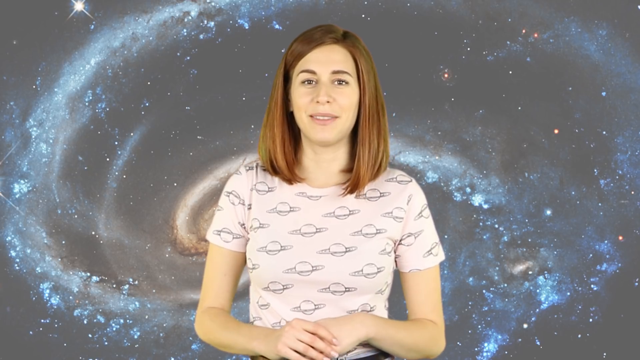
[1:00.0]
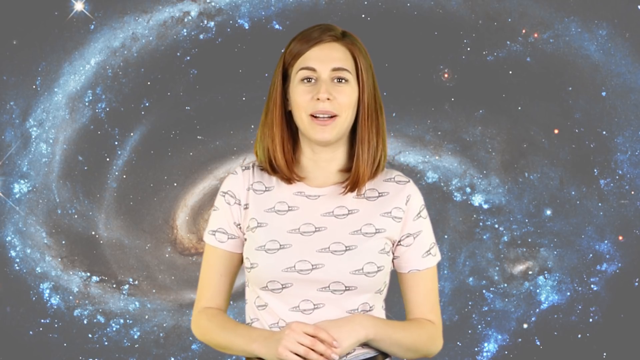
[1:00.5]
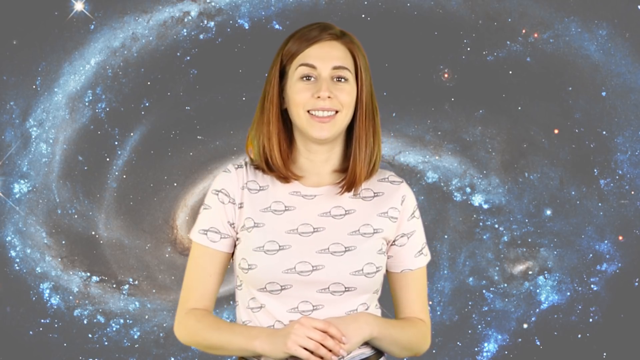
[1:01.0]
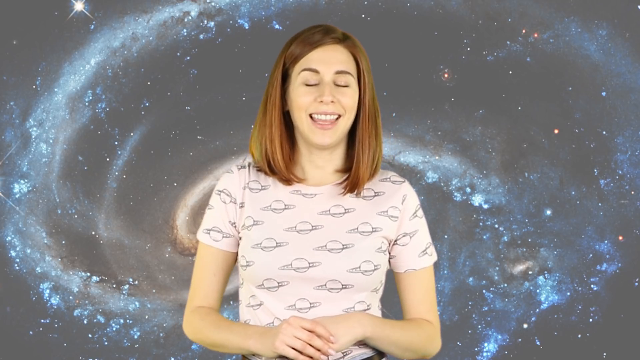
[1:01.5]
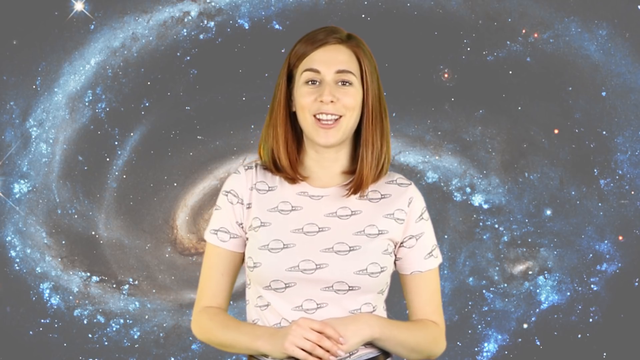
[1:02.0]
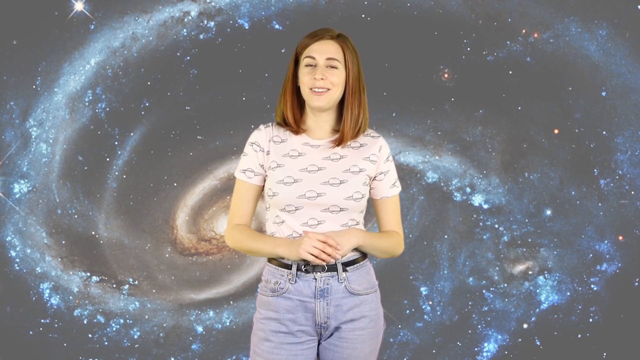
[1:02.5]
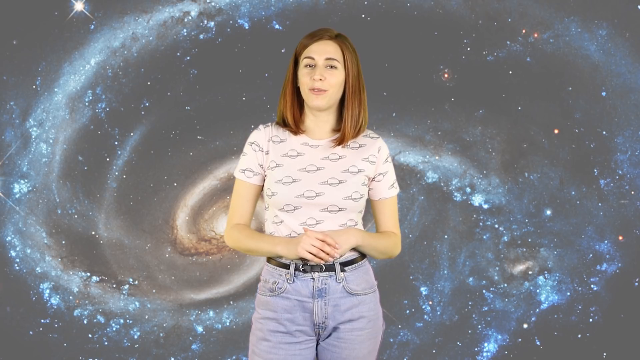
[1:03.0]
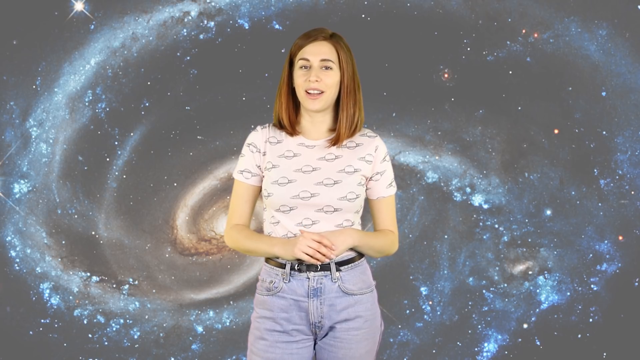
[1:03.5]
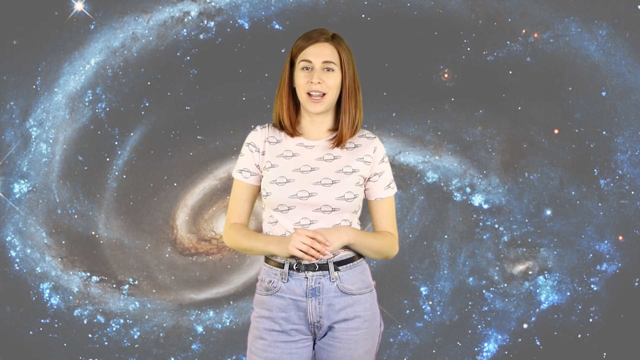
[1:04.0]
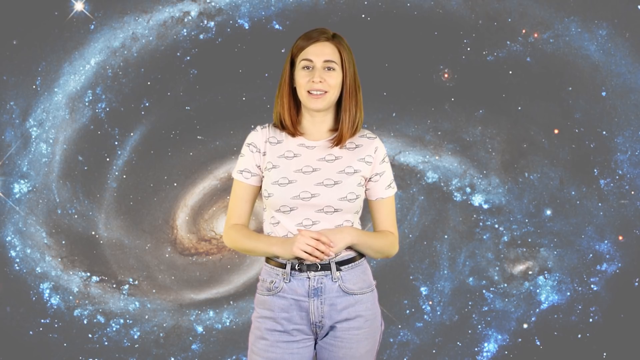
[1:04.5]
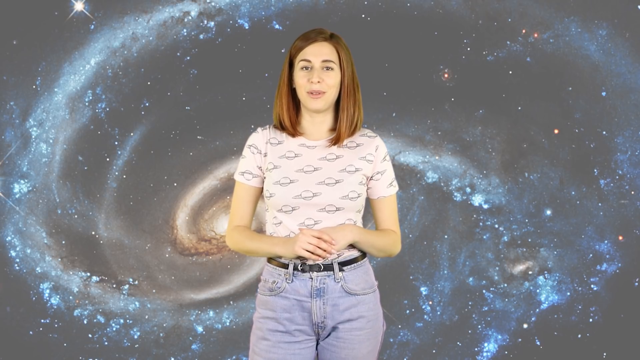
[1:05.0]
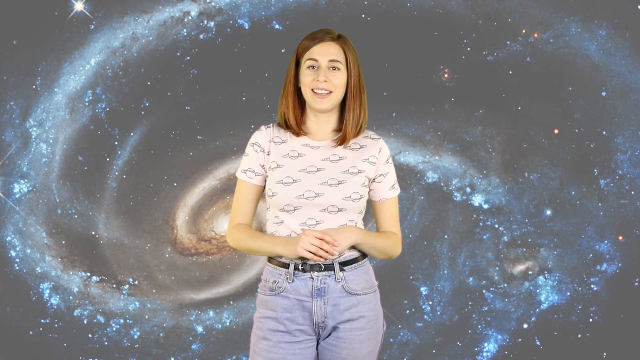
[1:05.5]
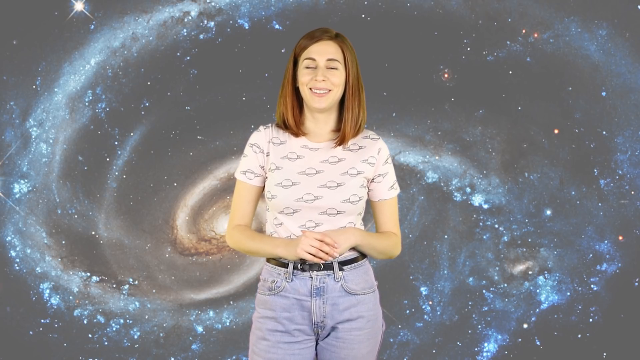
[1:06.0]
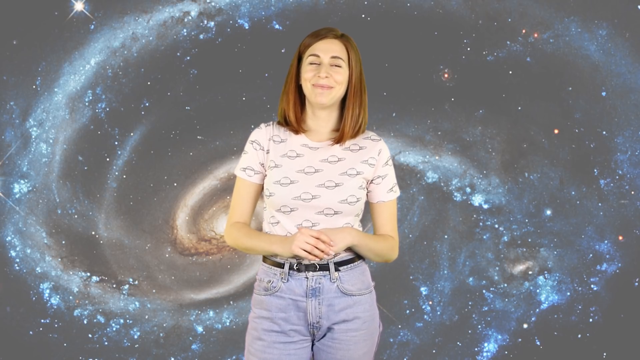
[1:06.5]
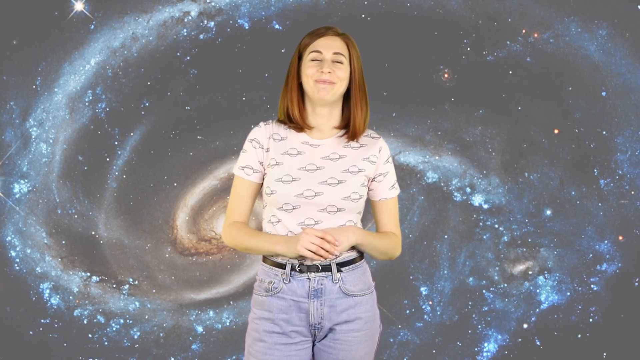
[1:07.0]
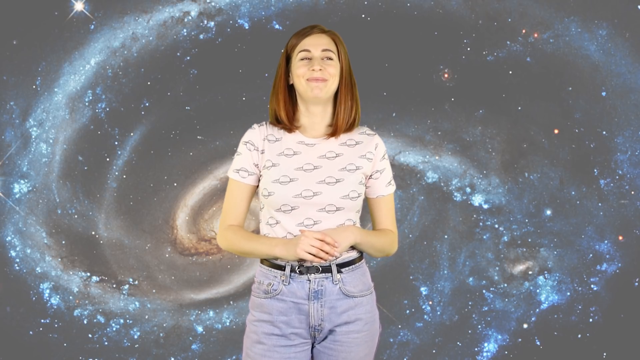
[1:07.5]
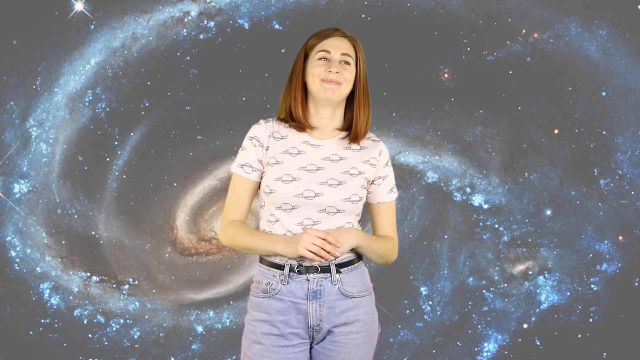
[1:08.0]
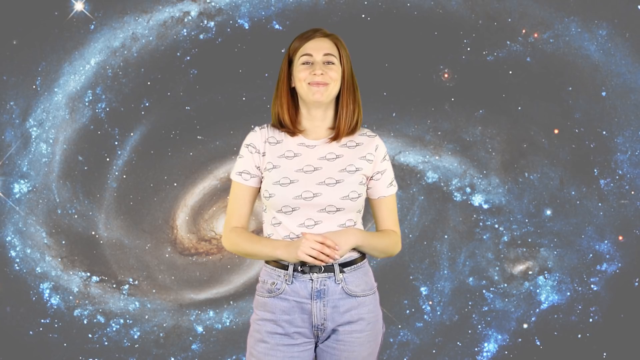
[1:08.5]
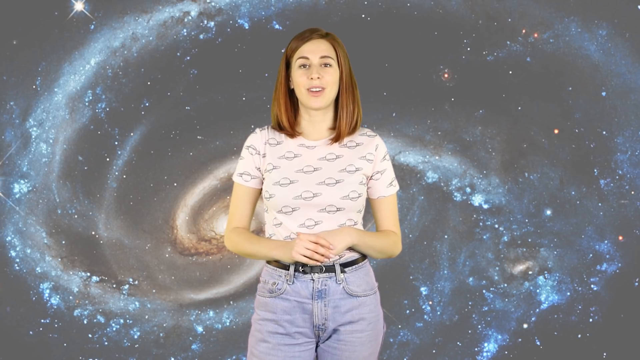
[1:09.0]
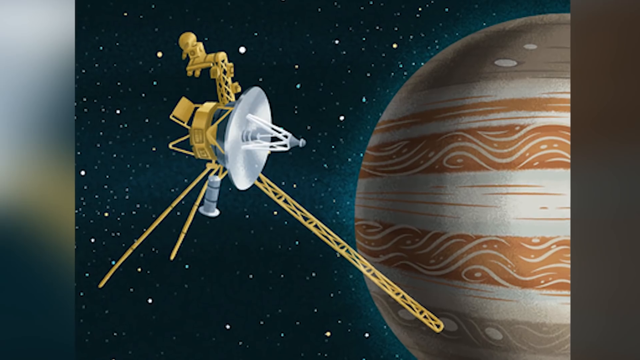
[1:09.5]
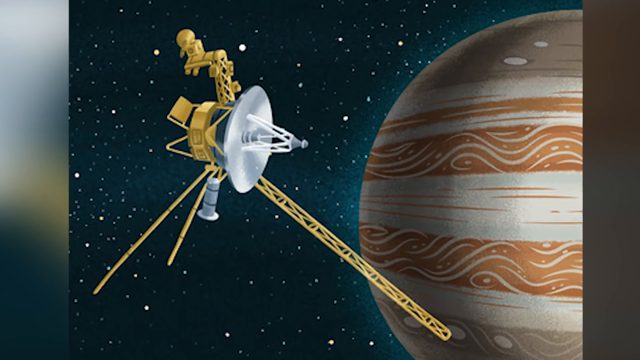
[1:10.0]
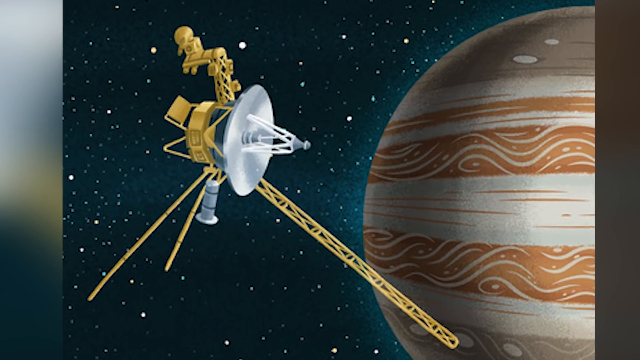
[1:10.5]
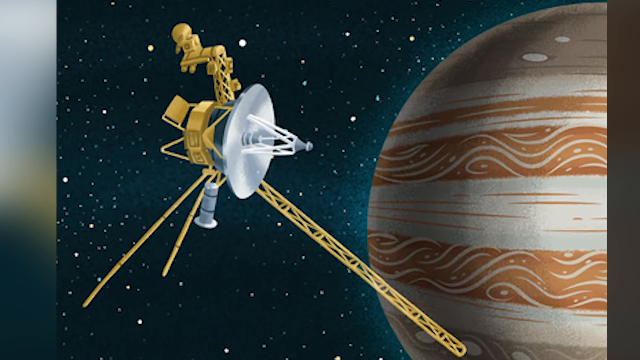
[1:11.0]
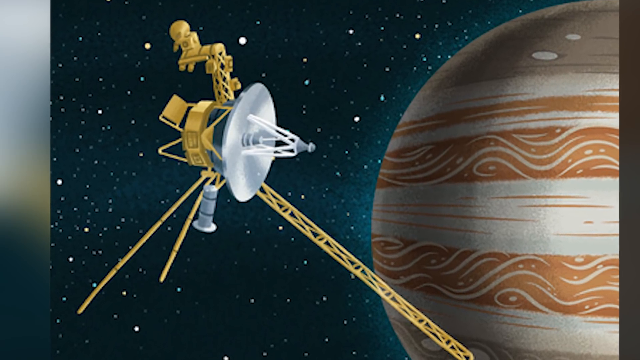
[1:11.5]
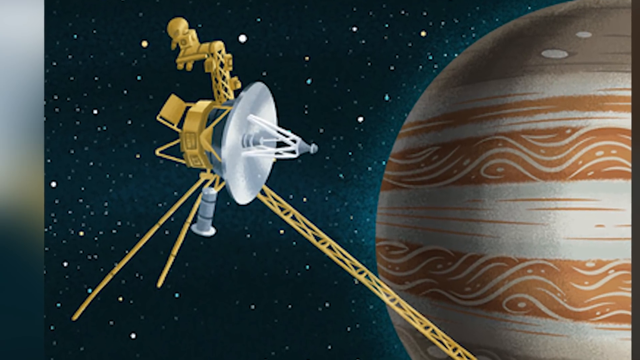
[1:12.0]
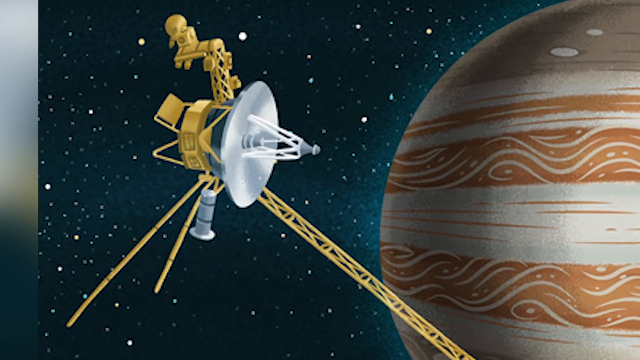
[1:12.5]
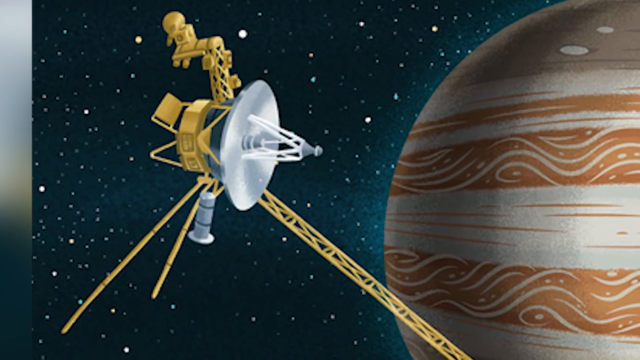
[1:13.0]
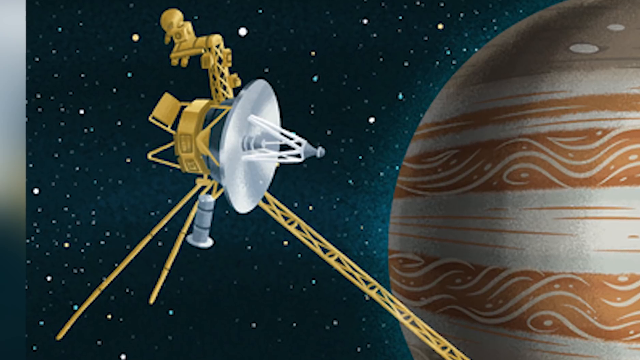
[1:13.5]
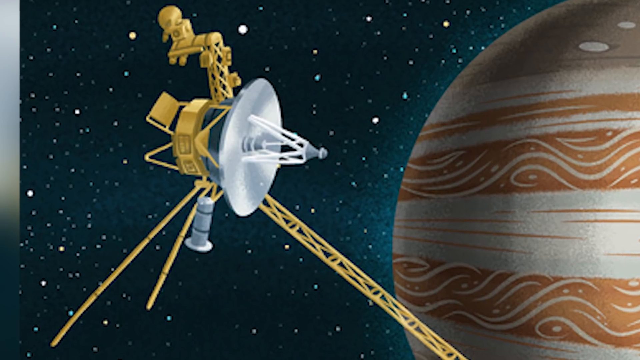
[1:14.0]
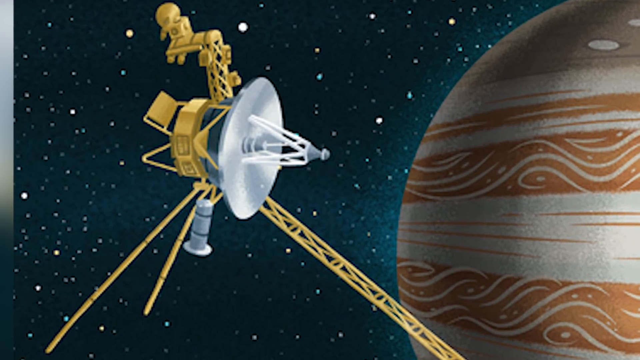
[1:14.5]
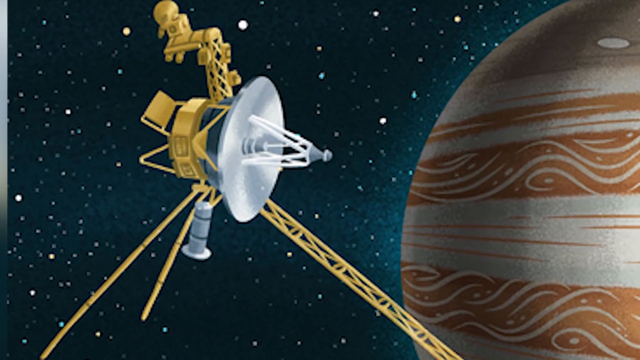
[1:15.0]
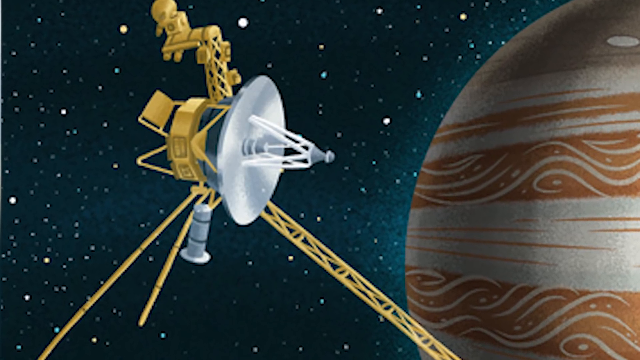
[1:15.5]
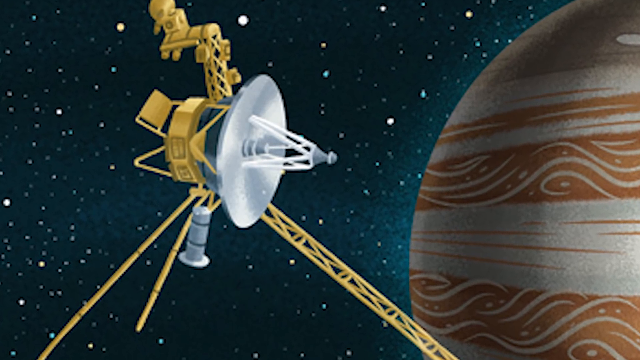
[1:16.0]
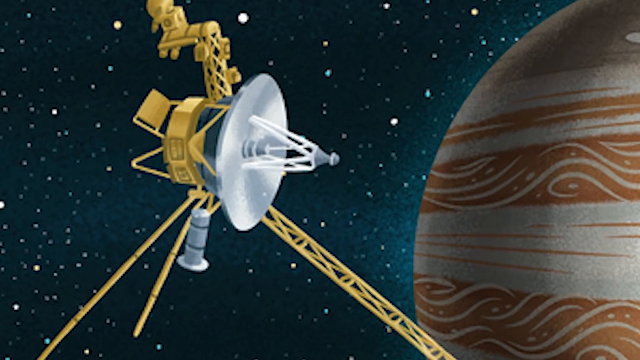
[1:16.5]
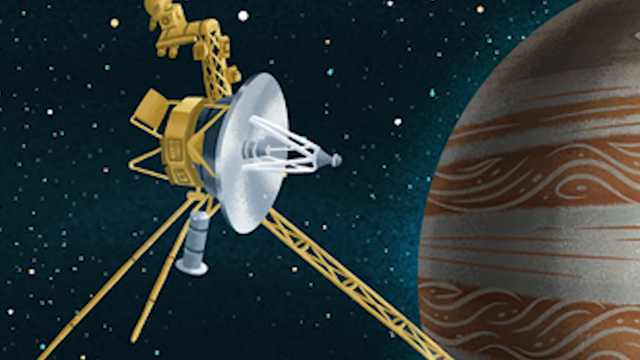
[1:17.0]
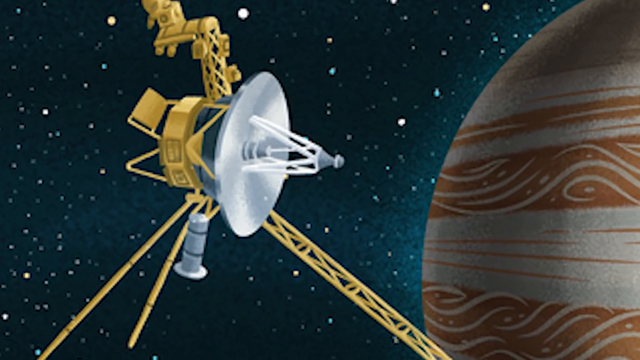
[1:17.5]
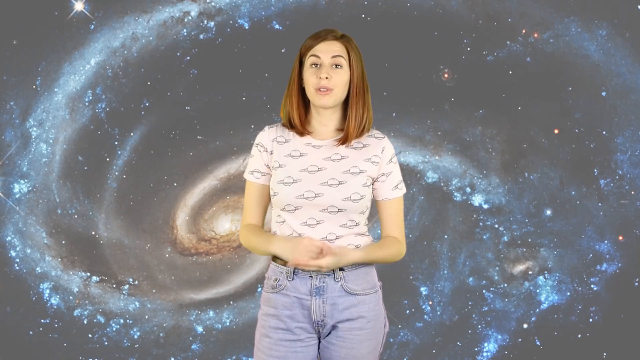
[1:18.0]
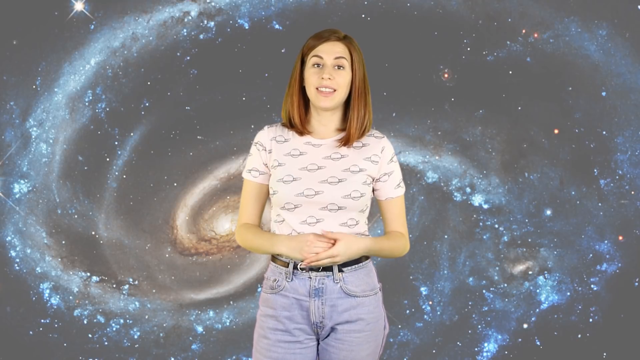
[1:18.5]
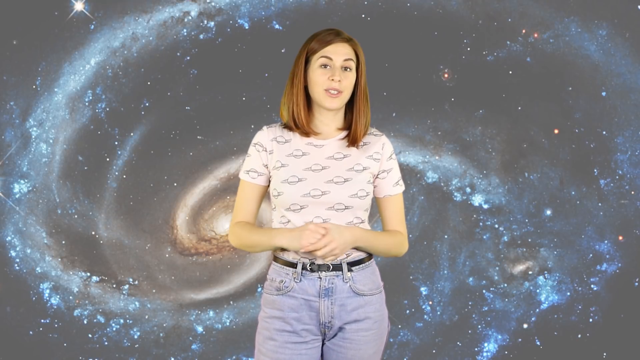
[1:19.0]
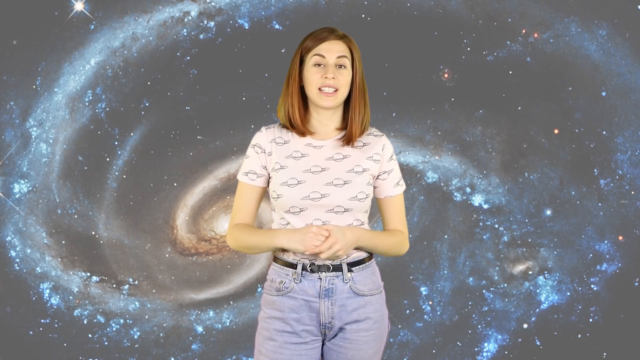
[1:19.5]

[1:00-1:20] The woman faces the viewer and talks, smiling as she speaks. Her hands are together in front of her with her elbows bent. She looks to the right side and then directly at the viewer. A picture follows of a floating object that appears to be a Voyager probe, a space explorer, on the left side next to the planet Jupiter on the right side, with a bunch of stars in the background. The view zooms inward toward the Voyager. The woman appears again, facing the viewer with her hands together, talking, with the image of a galaxy in the background.